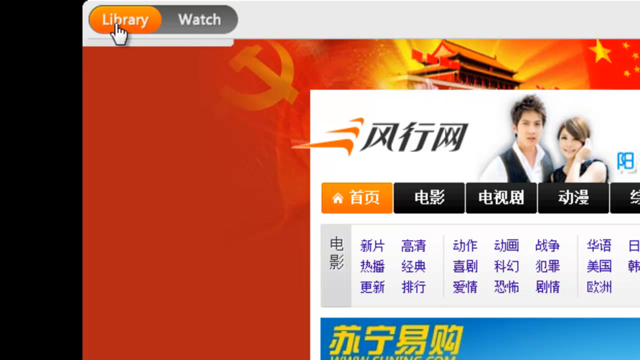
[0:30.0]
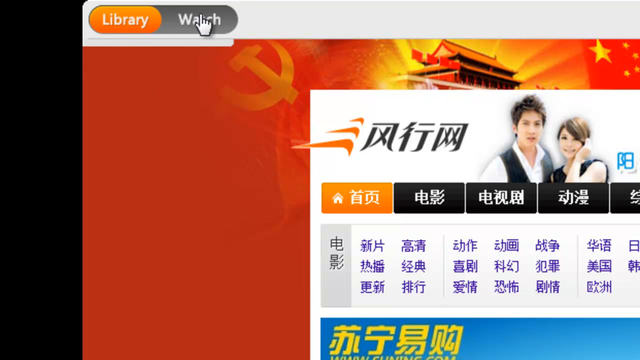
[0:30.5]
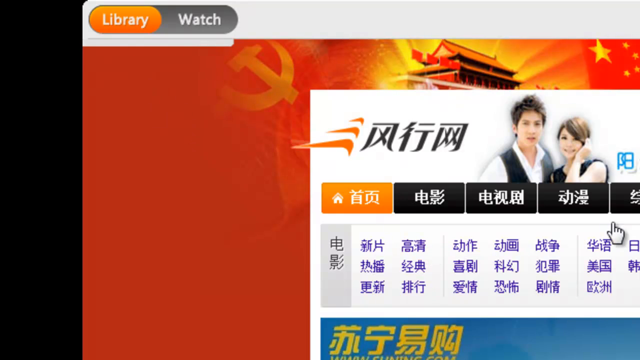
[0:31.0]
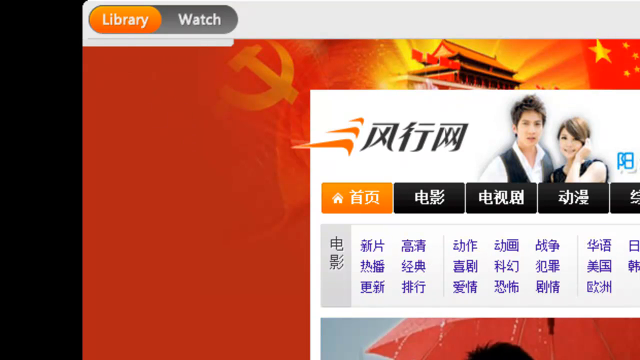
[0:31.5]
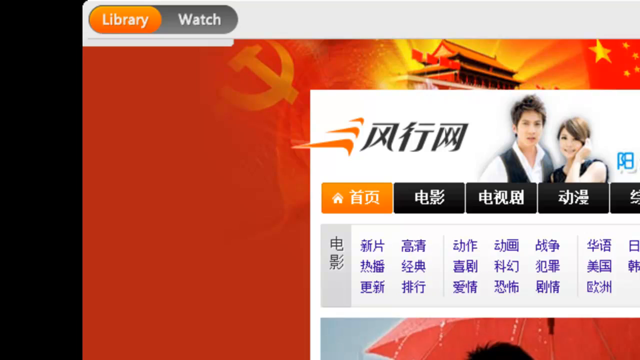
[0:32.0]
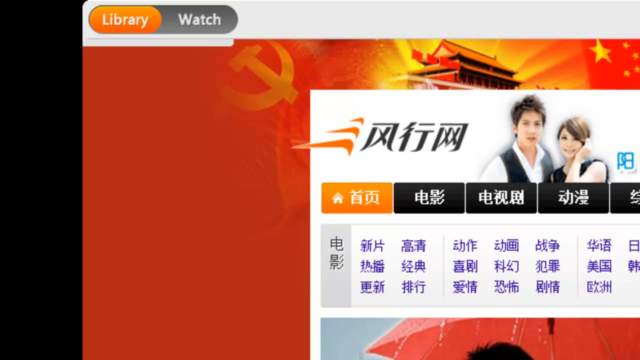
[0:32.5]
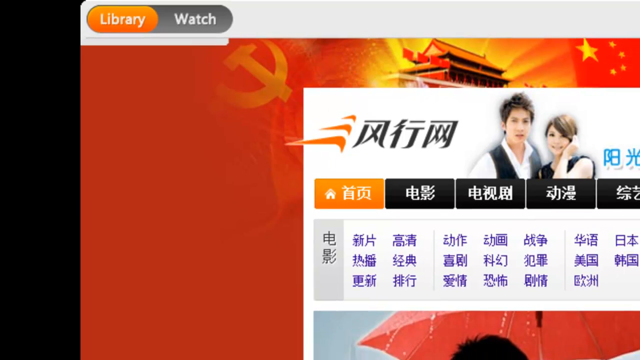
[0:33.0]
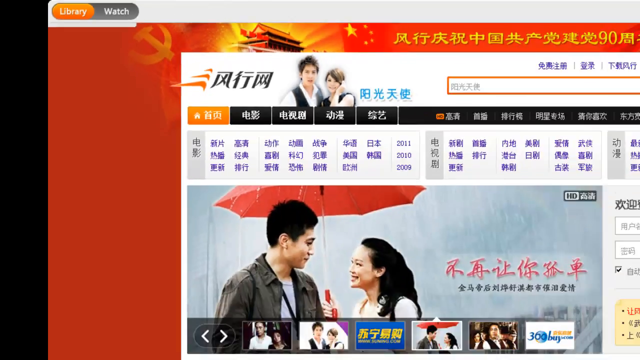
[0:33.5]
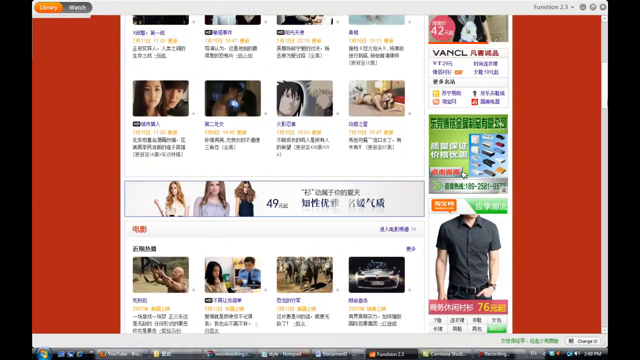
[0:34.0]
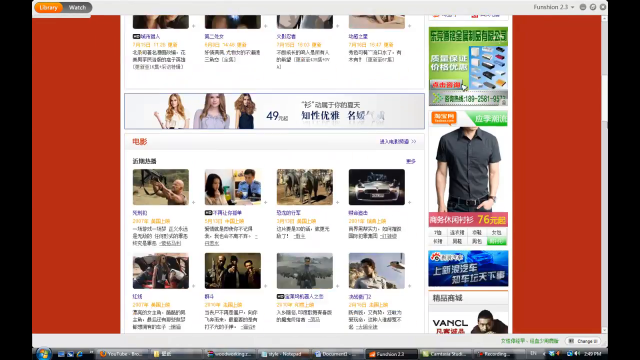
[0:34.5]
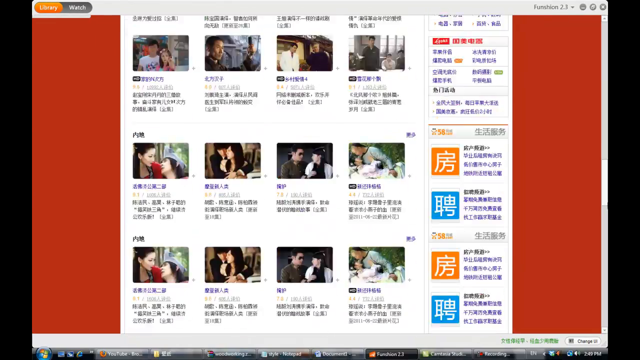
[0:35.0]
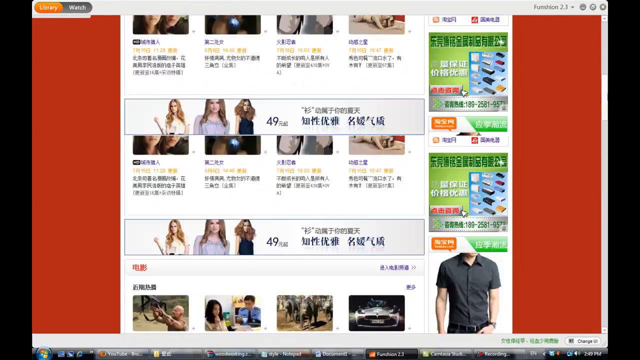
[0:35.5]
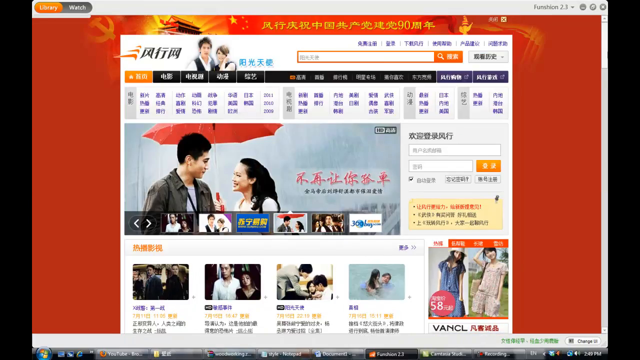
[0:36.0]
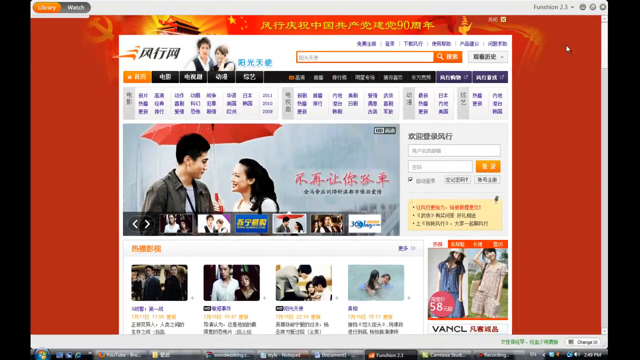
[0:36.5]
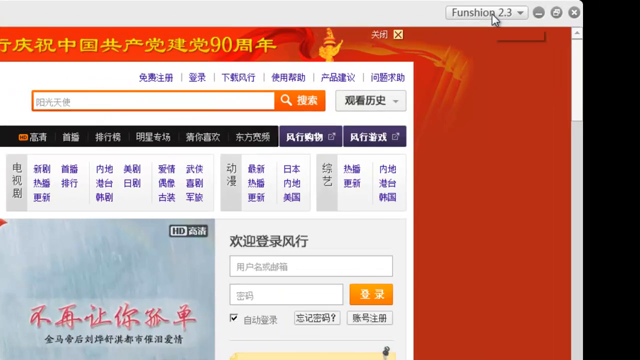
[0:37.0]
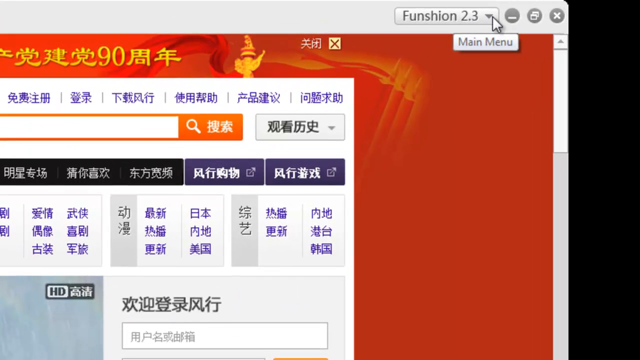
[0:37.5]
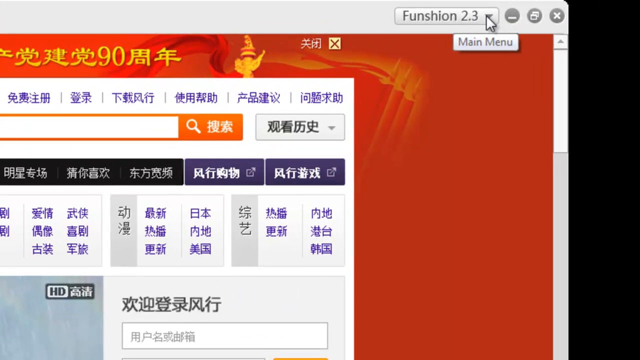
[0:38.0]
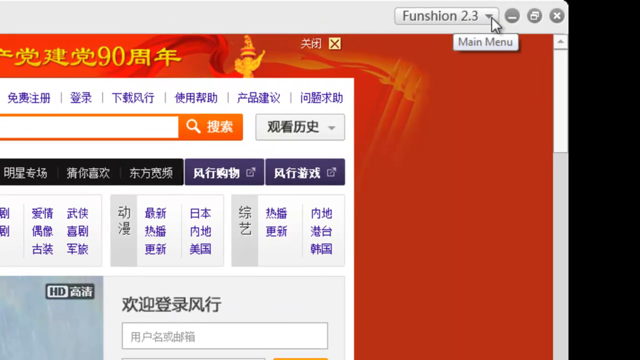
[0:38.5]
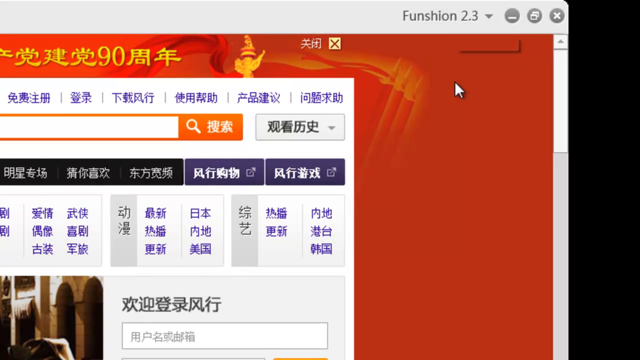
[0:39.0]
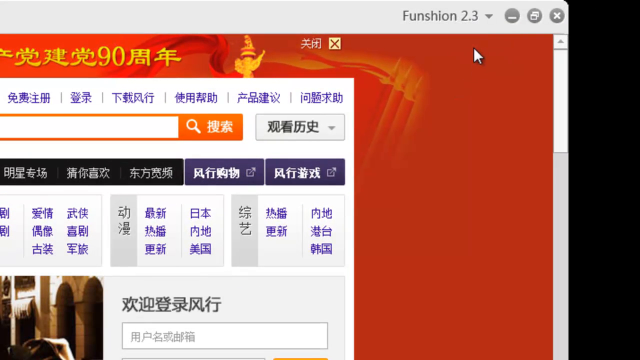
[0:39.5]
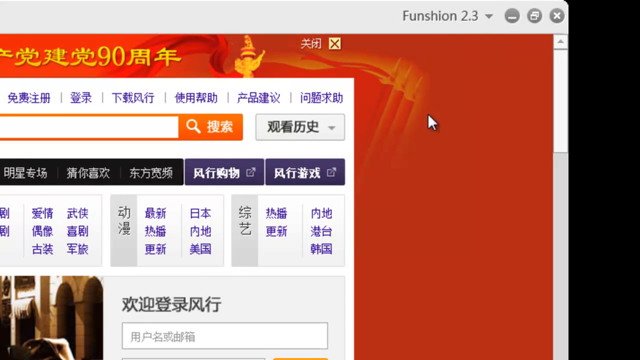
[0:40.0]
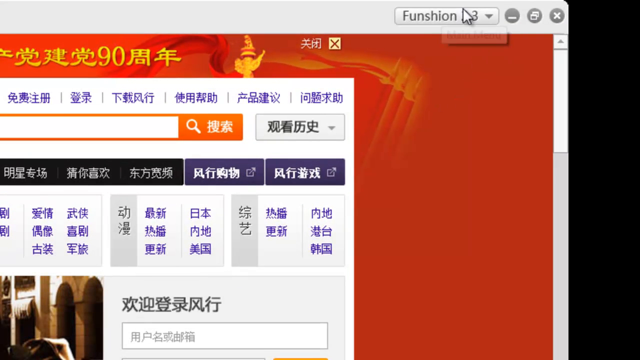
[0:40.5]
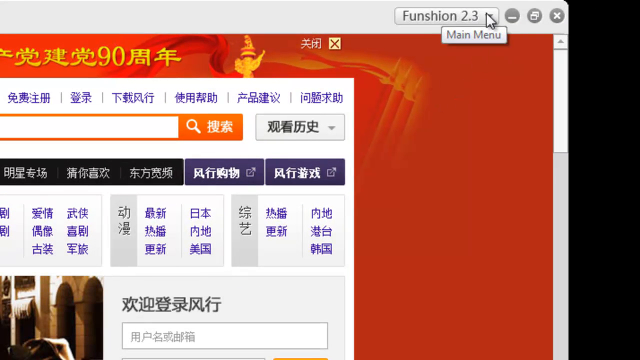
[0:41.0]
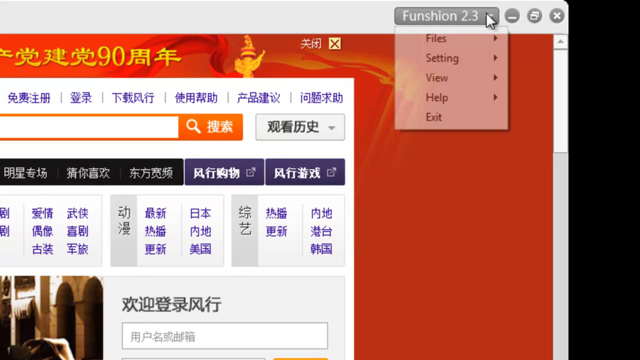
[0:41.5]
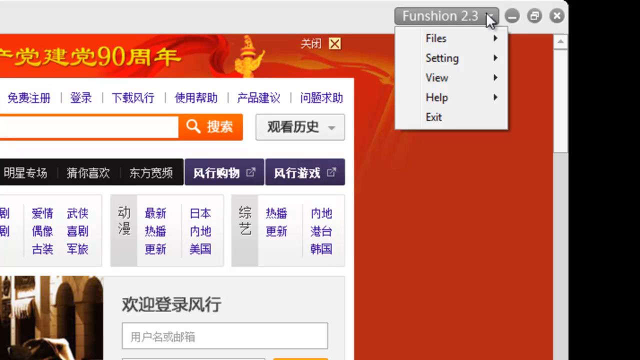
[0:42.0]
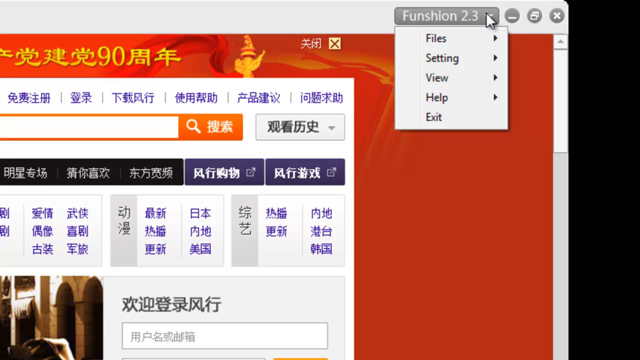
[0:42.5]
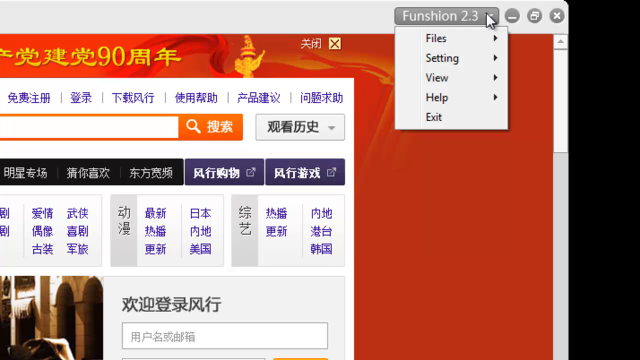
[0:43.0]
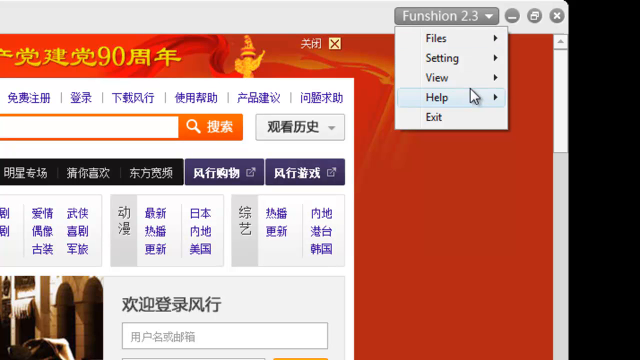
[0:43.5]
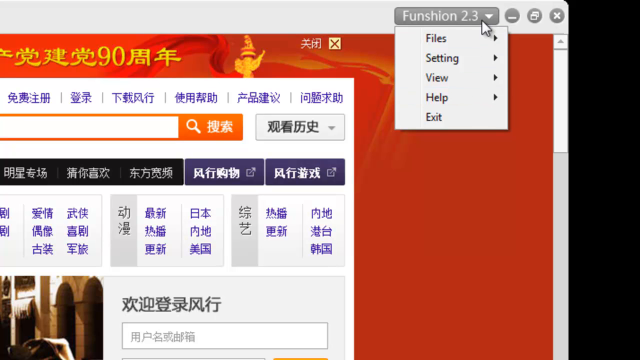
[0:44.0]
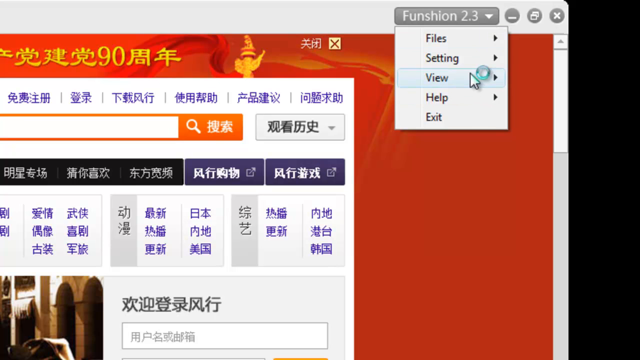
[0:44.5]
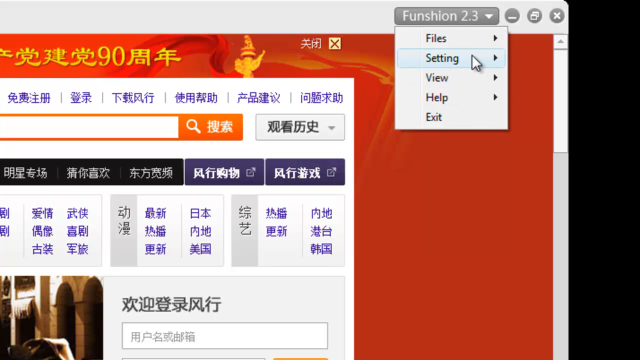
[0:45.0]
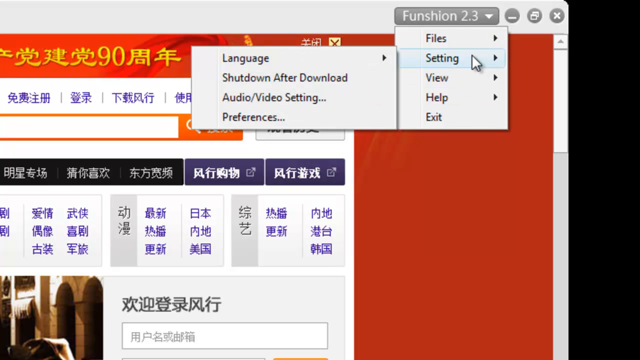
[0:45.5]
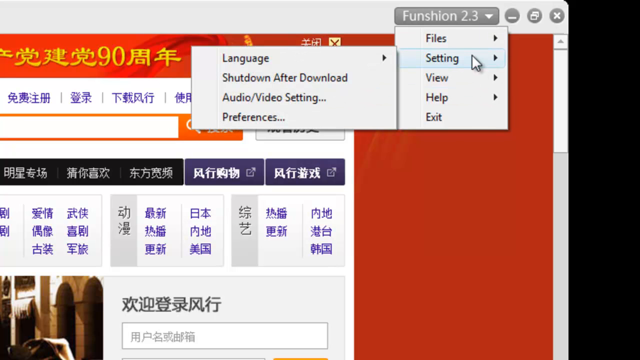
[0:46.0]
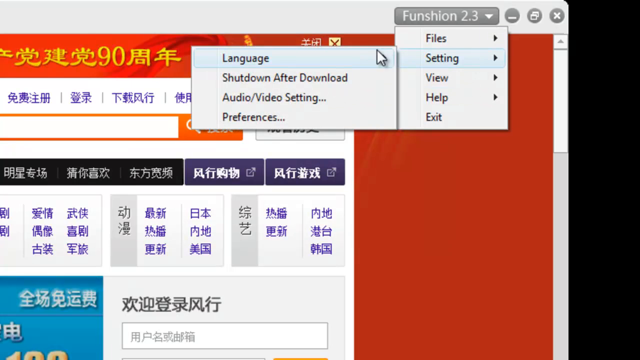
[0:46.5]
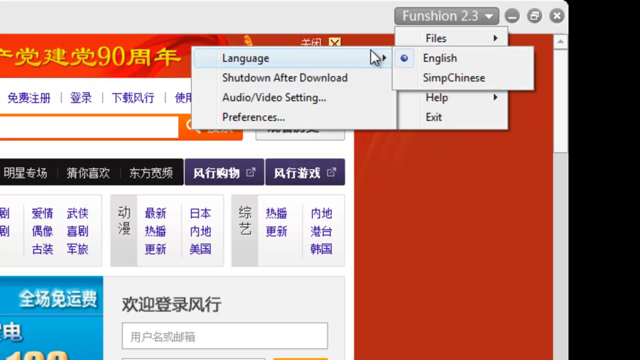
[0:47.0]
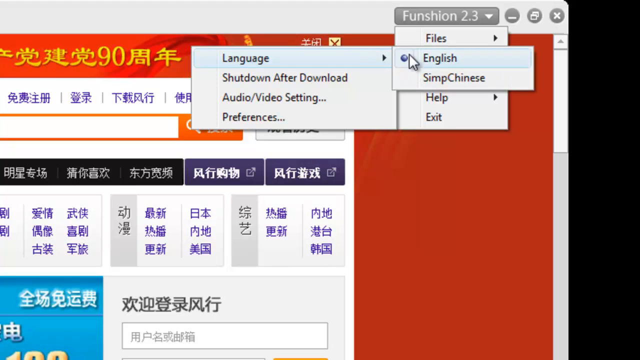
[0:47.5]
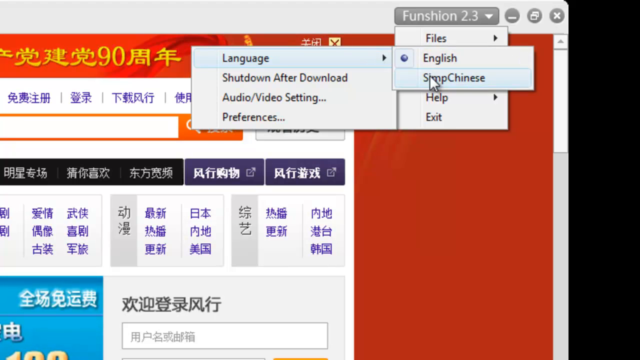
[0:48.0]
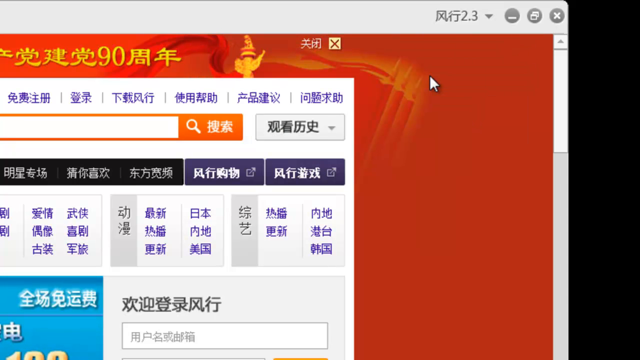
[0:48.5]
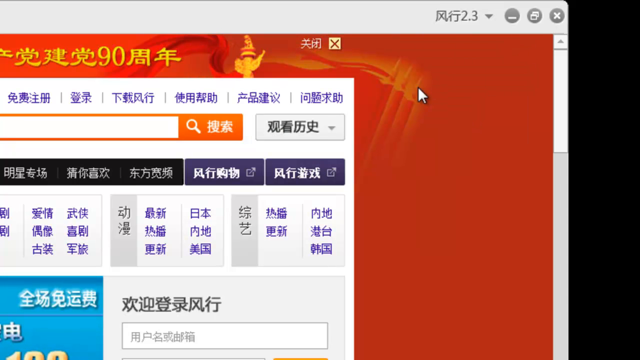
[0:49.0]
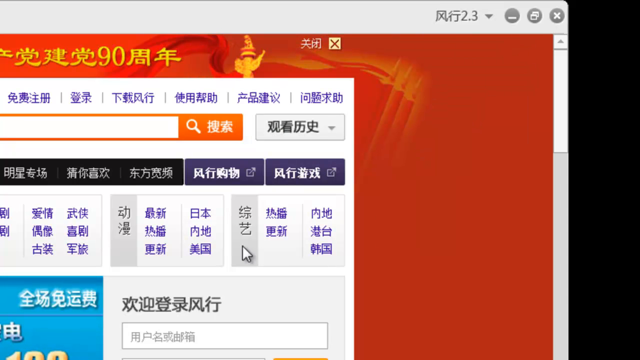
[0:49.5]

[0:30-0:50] The user continues the demonstration on what looks like a virtual computer showing the website, which looks like a dating app. The website has options for changing the language, for example from English to Chinese. A person appears at the top left of the website. A radio button is present, and a toggle button at the top switches between library and watch; the orange button is currently up, highlighting library. Options for customizing the view, the zoom and the exposure of the app are shown.